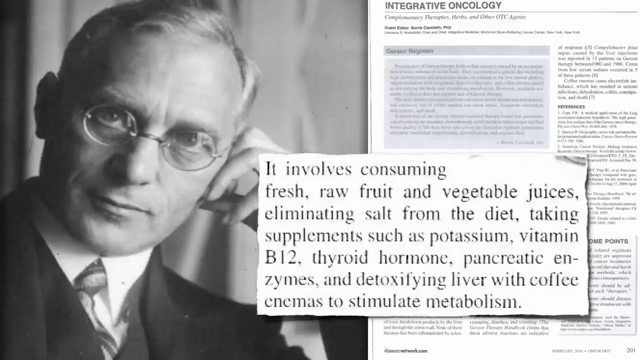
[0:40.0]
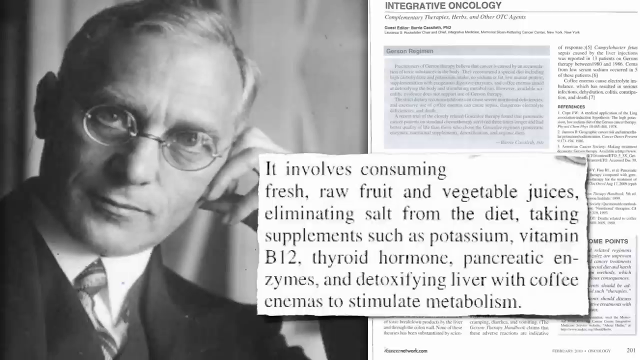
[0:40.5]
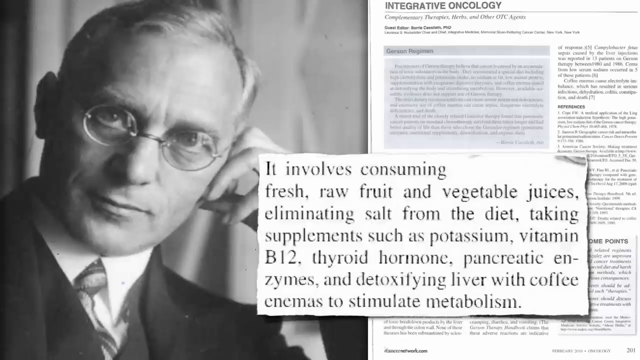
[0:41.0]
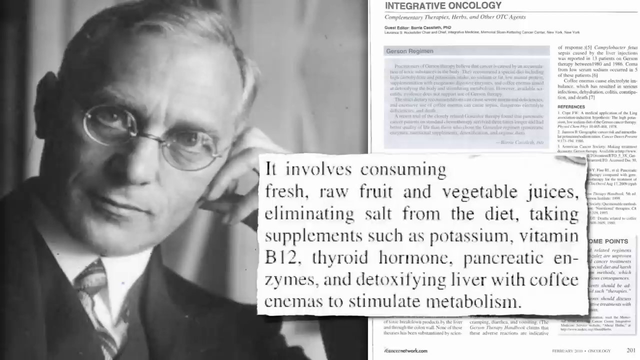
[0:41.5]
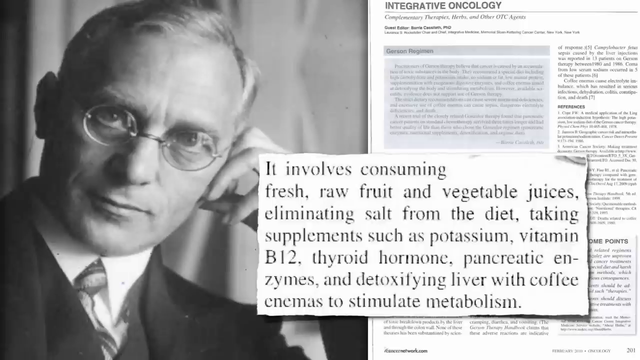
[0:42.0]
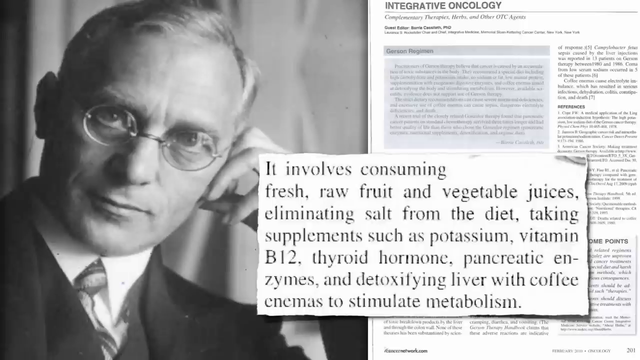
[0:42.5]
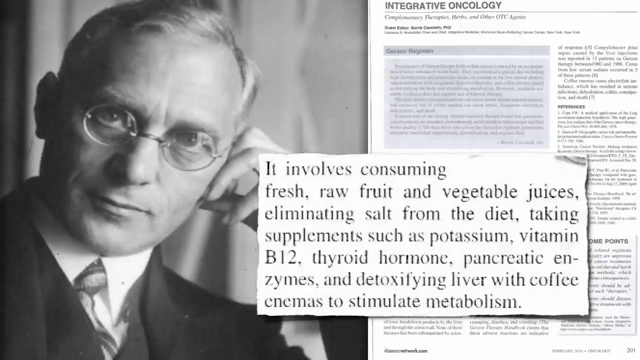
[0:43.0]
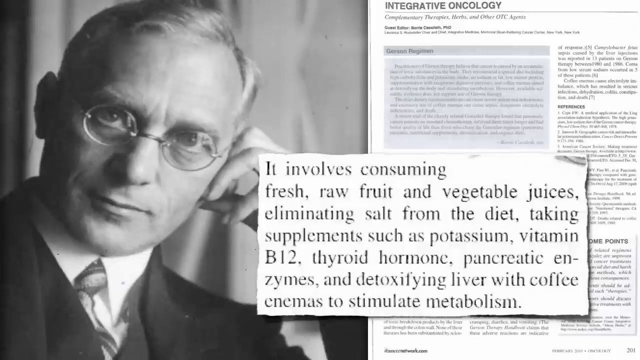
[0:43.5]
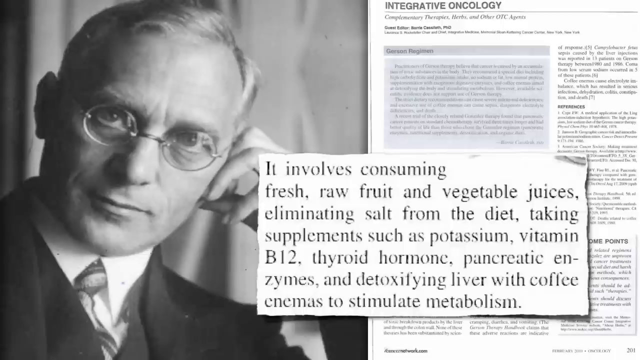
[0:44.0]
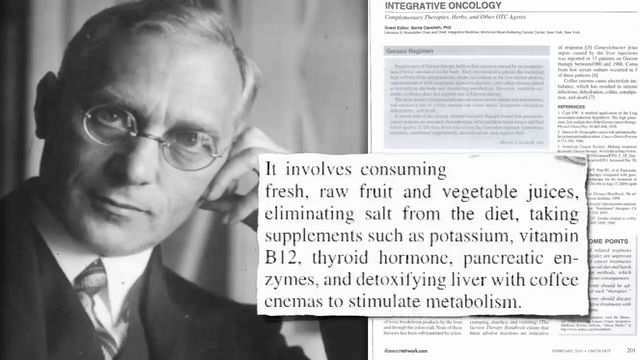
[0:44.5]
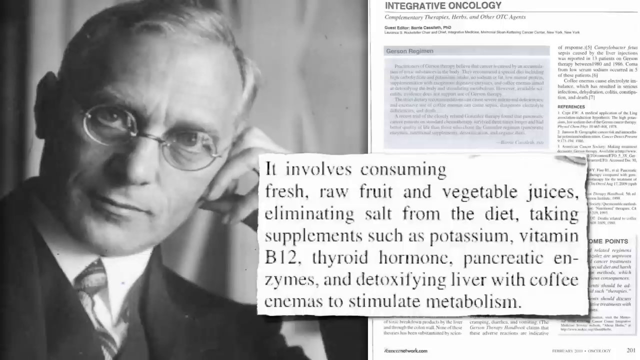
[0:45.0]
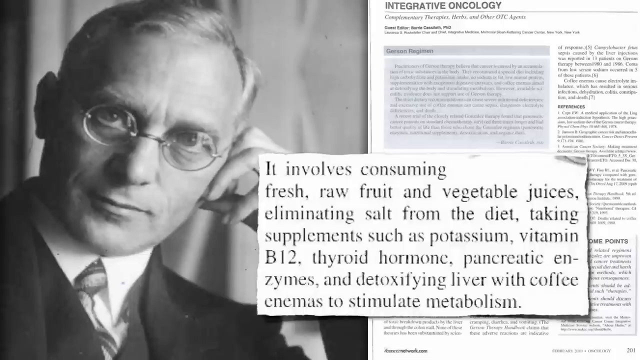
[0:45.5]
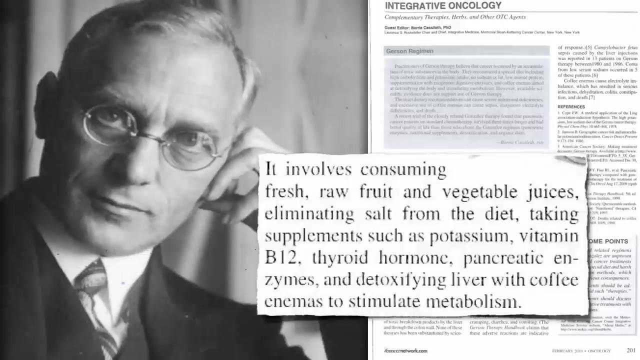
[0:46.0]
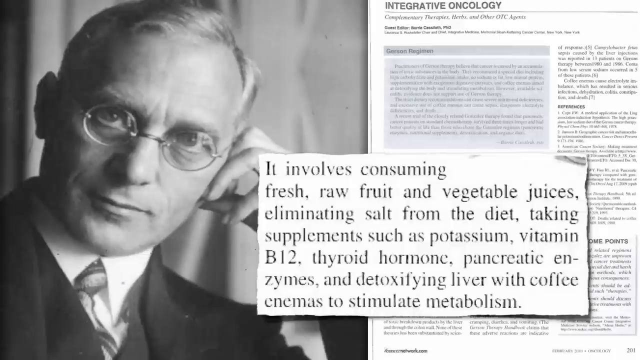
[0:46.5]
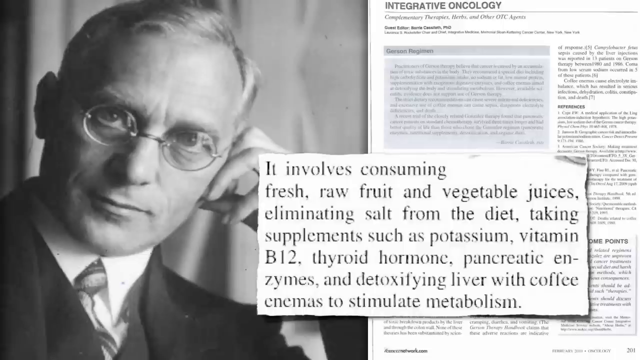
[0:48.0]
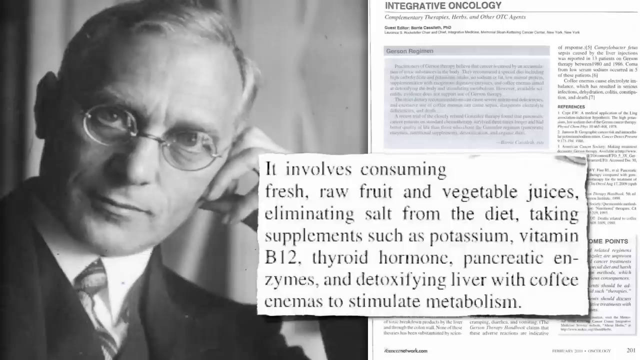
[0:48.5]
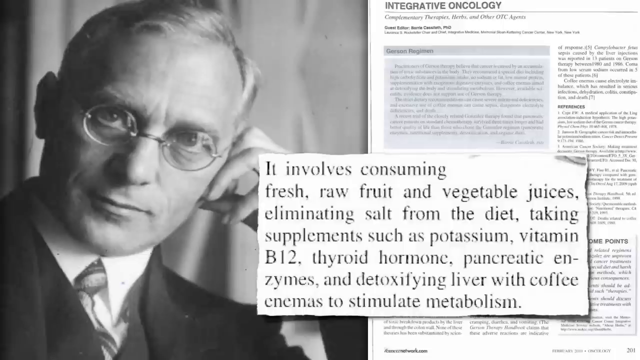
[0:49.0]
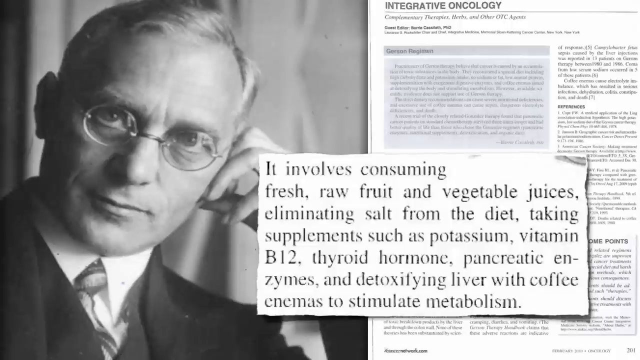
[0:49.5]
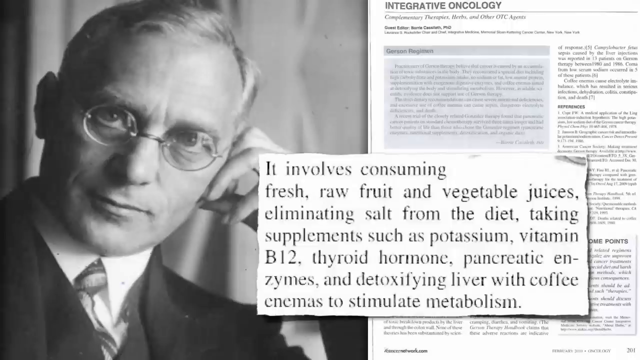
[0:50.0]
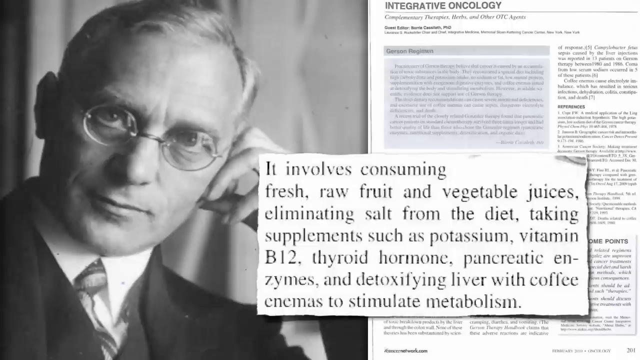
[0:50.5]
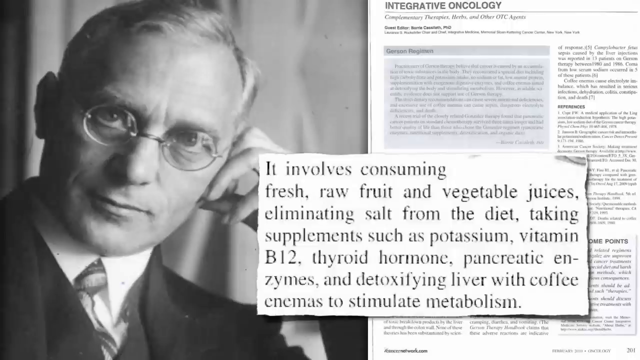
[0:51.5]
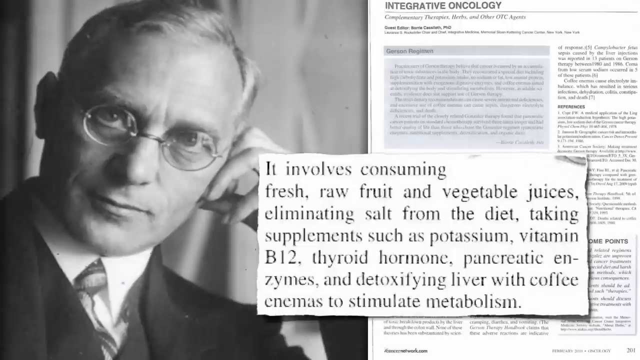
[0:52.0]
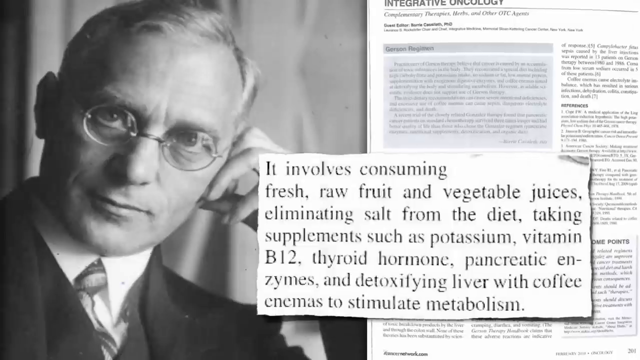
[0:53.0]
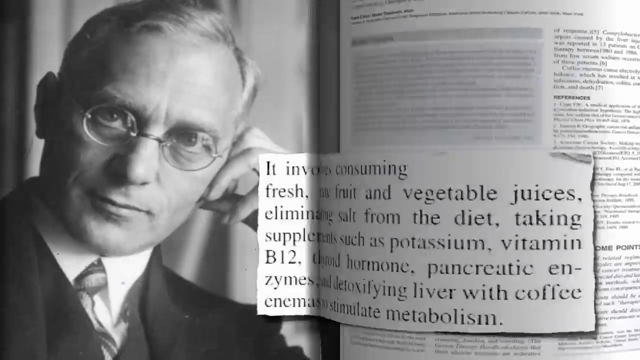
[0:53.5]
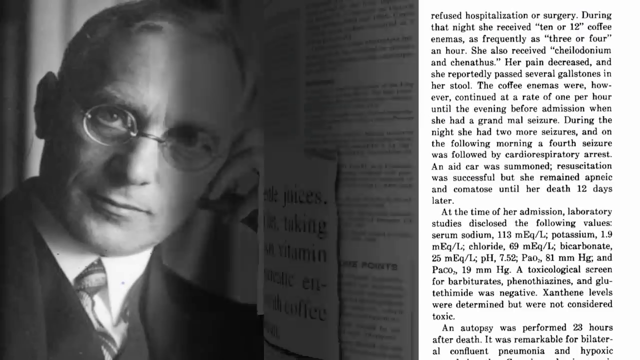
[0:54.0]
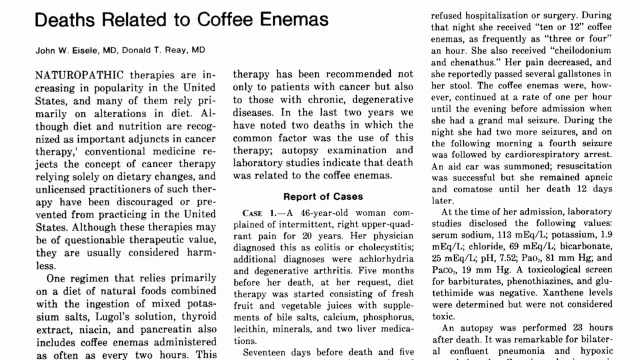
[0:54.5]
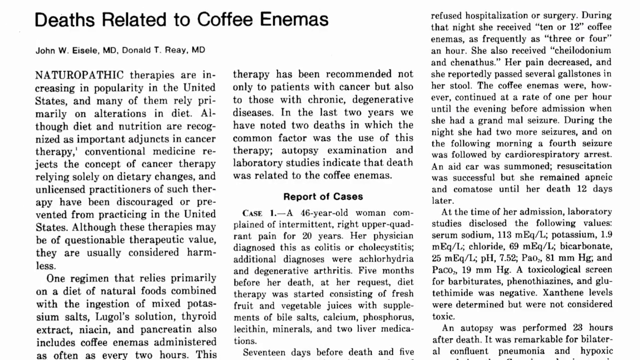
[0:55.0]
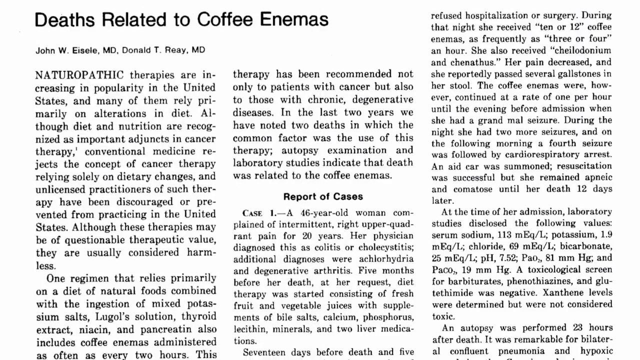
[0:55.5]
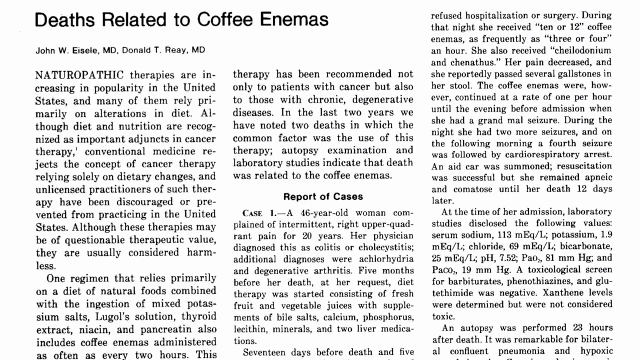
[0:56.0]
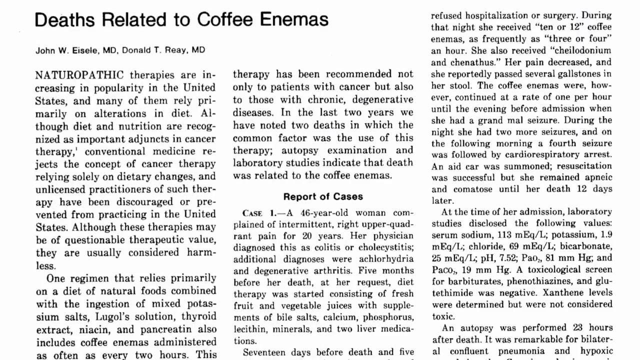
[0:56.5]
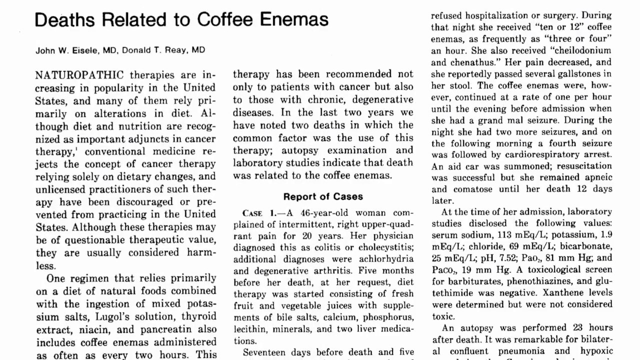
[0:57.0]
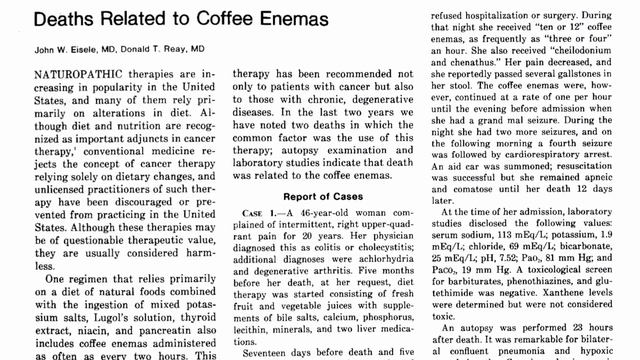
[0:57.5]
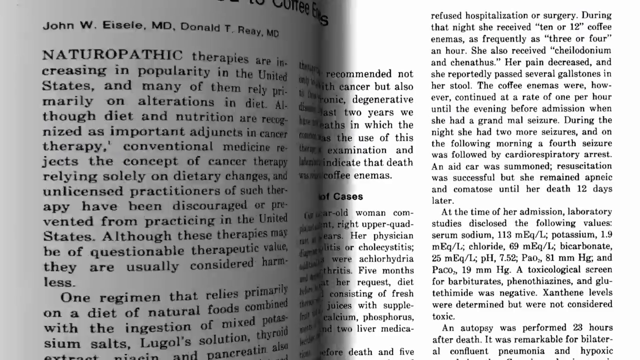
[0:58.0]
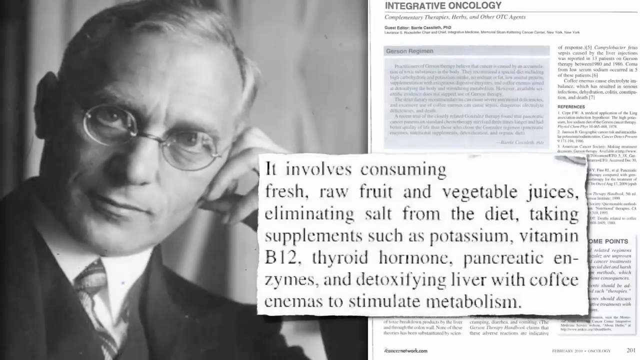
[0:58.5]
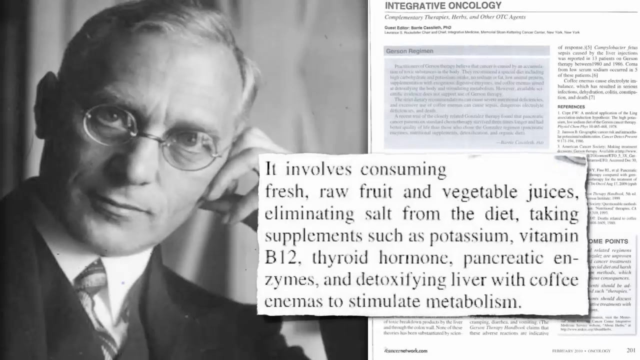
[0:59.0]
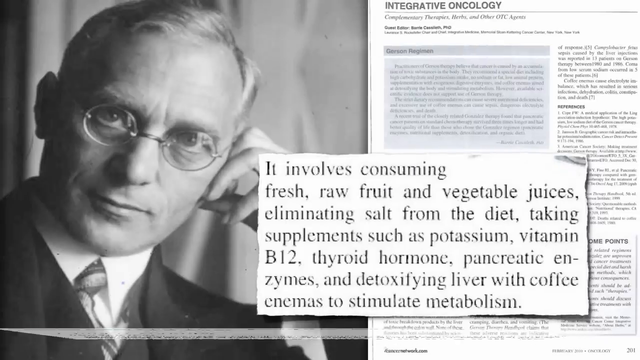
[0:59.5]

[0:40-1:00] A black-and-white image of a man is on the left side of the screen. He is looking towards the camera, with his left hand bent up so that just his fingers touch the side of his face; his pinky finger is not touching his face and is straight, pointing down. He wears a black suit and round glasses. On the right side of the screen is an article with a lot of writing too small to make out, with "integrative oncology" at the top. Part of the article is enlarged and reads "it involves consuming fresh raw fruit and vegetables juices, eliminating salt from the diet, taking supplements such as potassium, vitamin B12, thyroid hormone, pancreatic enzymes, and detoxifying liver with coffee enemas to stimulate metabolism." This stays on screen for several seconds. Then, from the right side of the screen, it looks like a page is being turned; the page covers the entire picture of the man. At its top is what looks like a news article reading "death related to coffee enemas." The page then flips back, showing the previous screen.